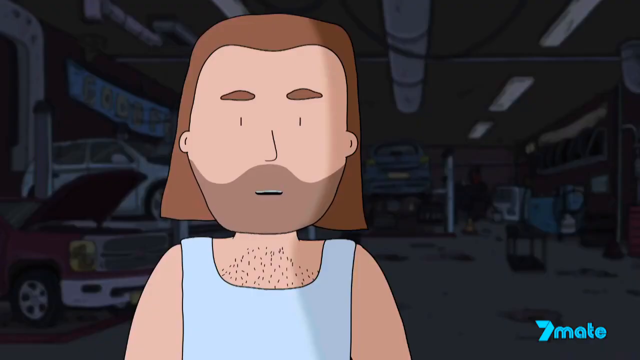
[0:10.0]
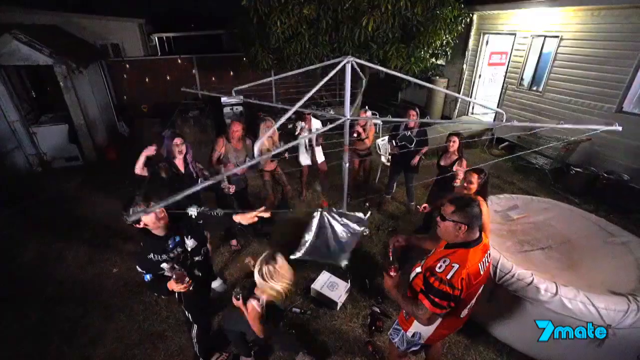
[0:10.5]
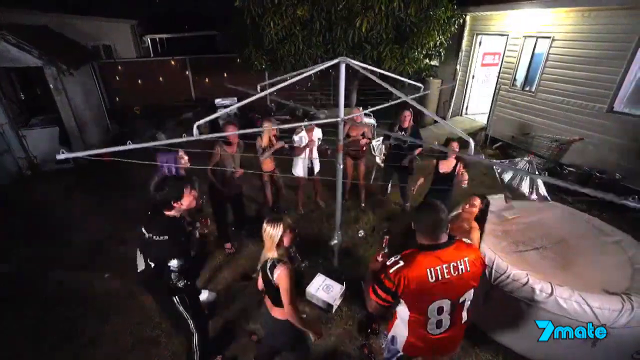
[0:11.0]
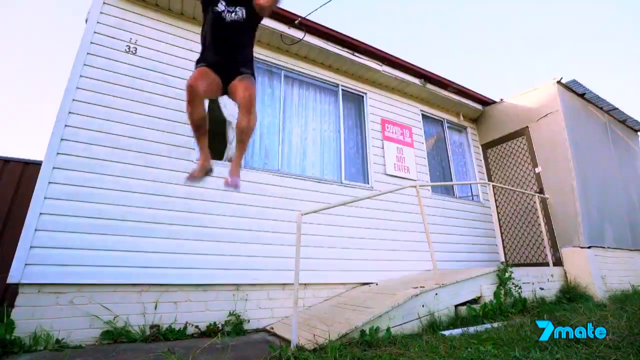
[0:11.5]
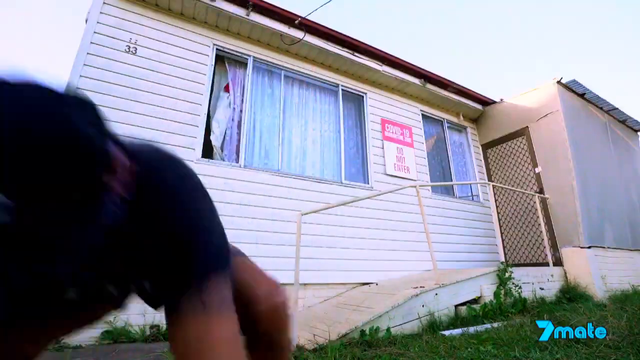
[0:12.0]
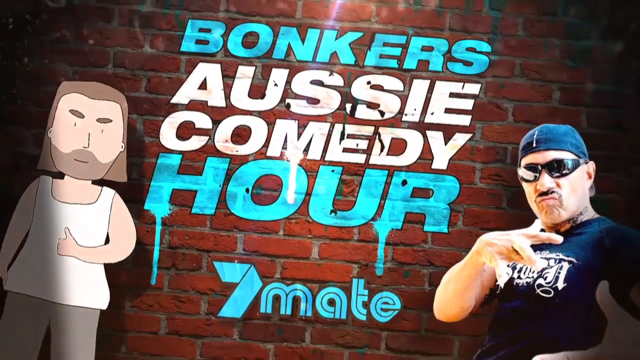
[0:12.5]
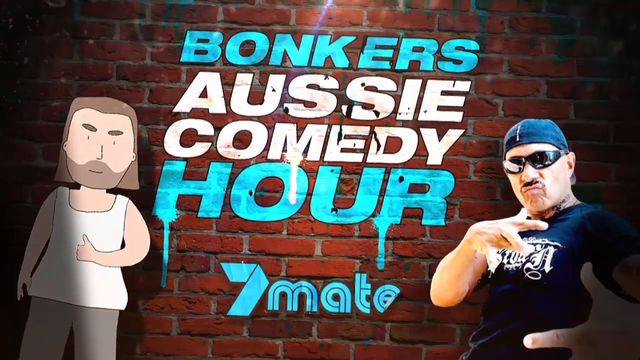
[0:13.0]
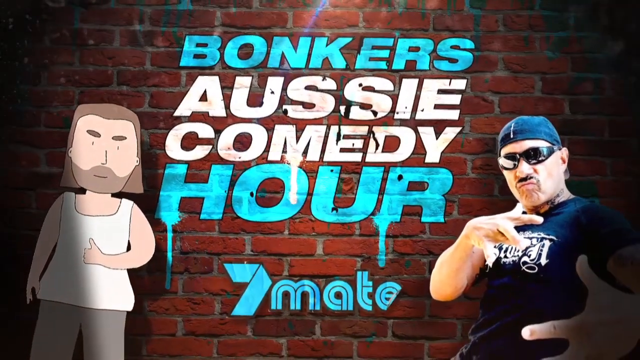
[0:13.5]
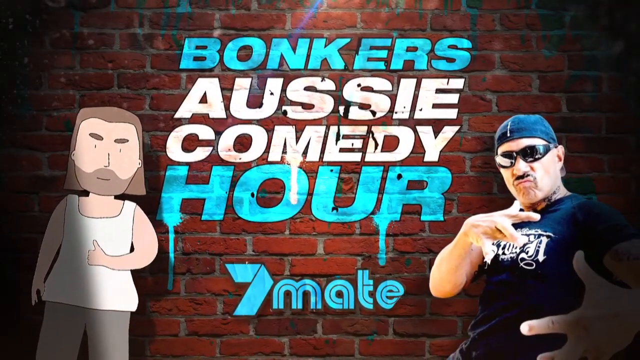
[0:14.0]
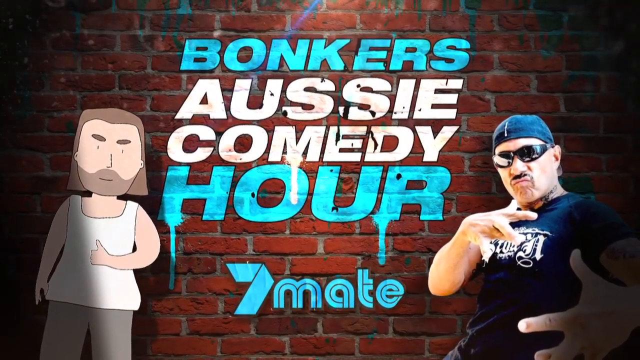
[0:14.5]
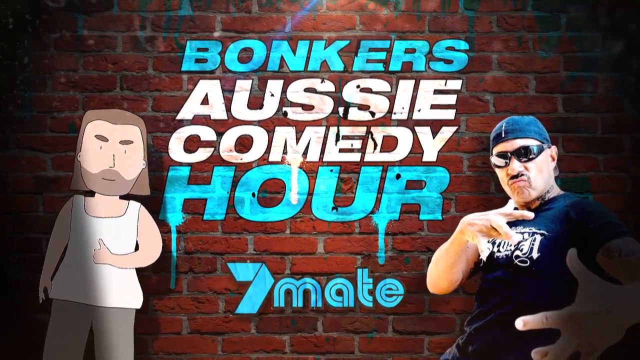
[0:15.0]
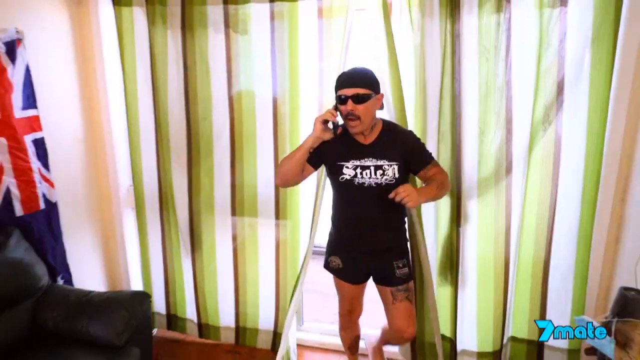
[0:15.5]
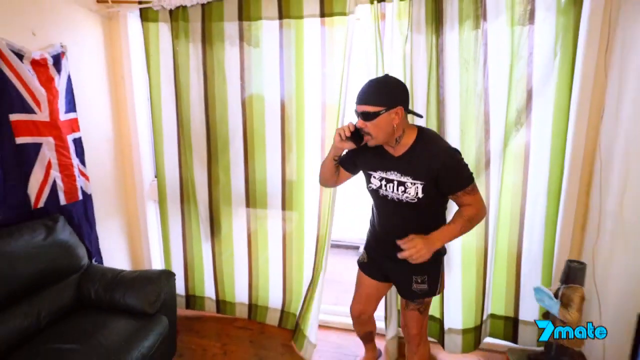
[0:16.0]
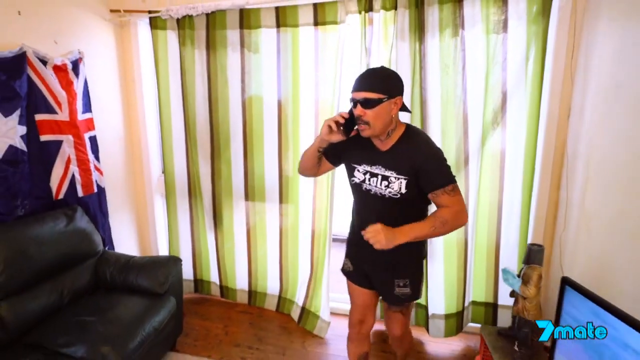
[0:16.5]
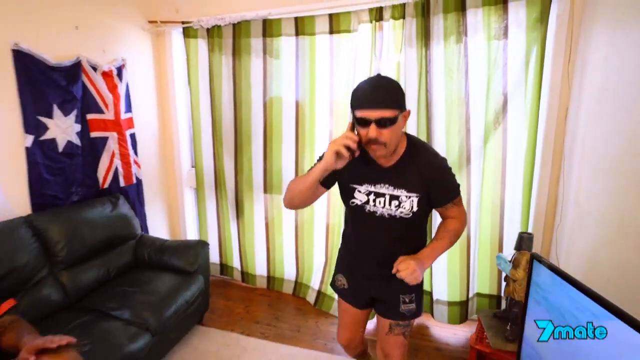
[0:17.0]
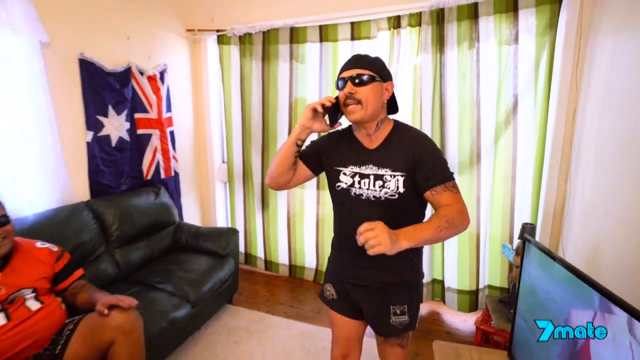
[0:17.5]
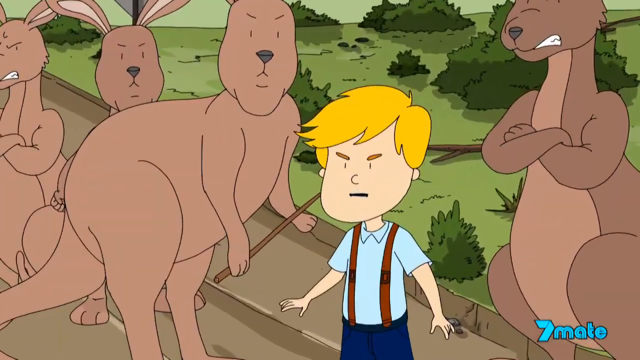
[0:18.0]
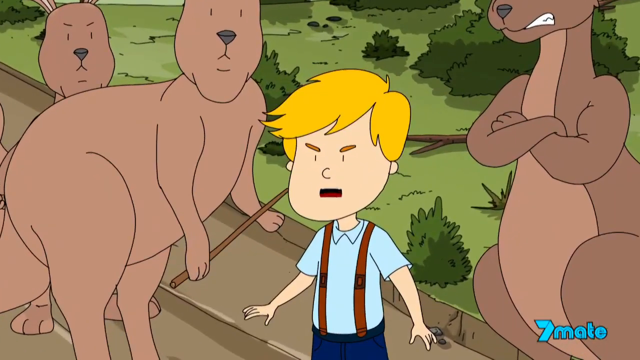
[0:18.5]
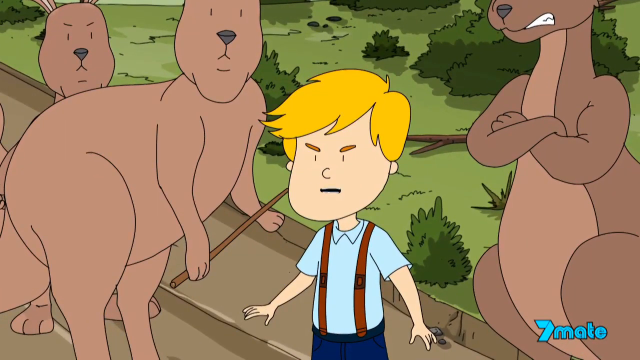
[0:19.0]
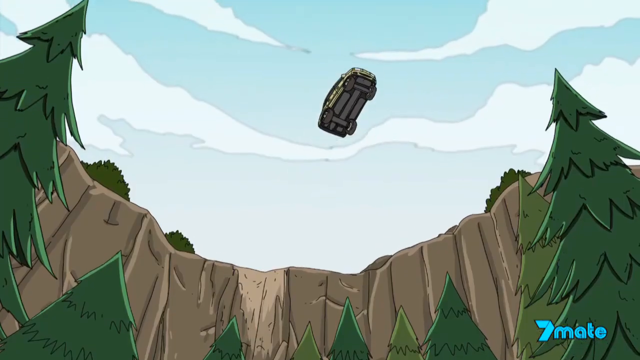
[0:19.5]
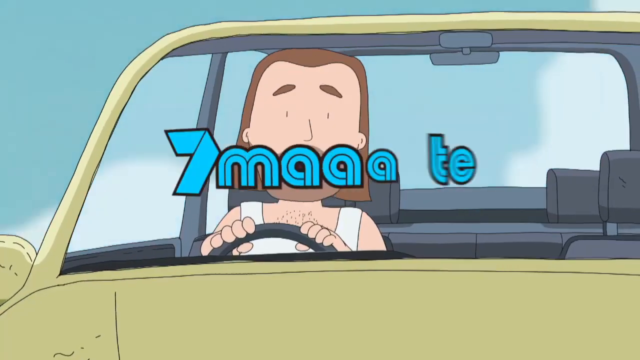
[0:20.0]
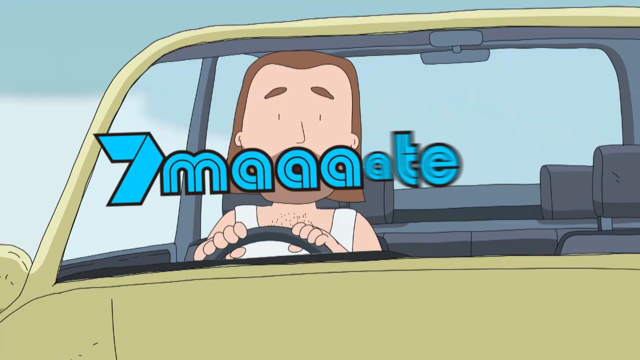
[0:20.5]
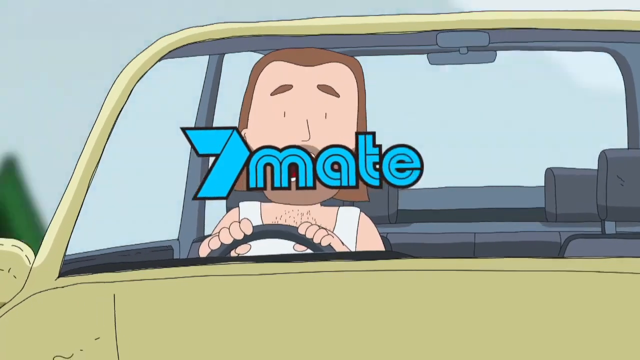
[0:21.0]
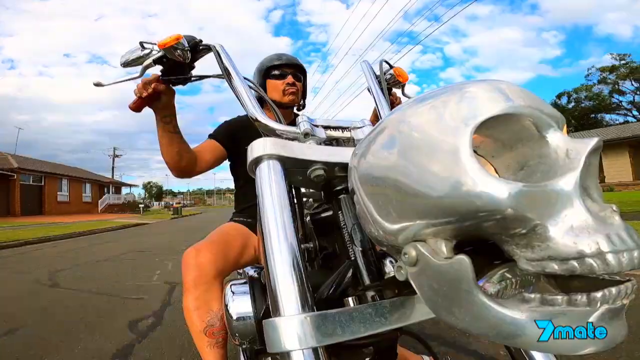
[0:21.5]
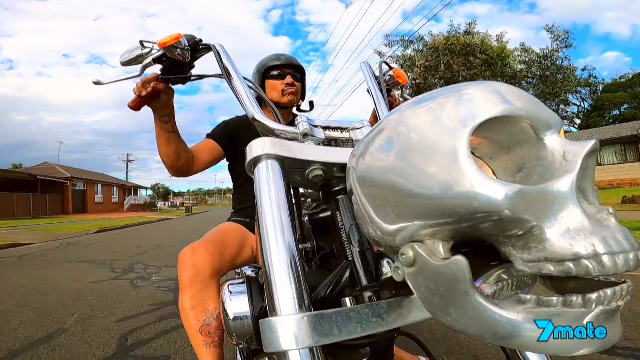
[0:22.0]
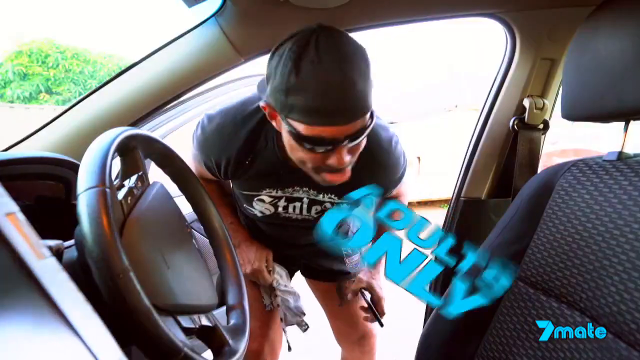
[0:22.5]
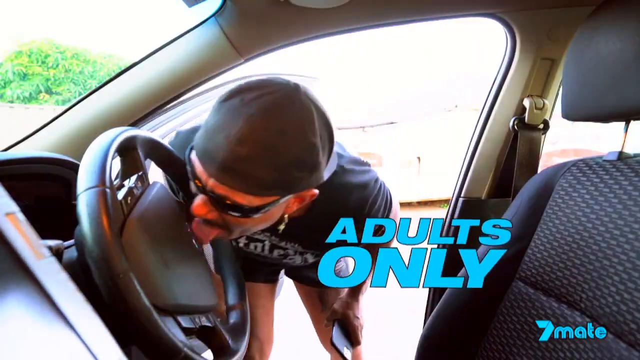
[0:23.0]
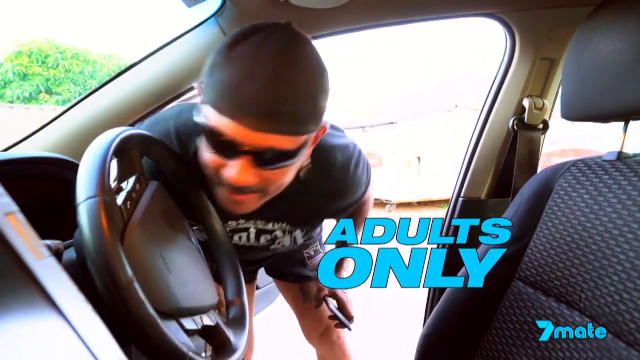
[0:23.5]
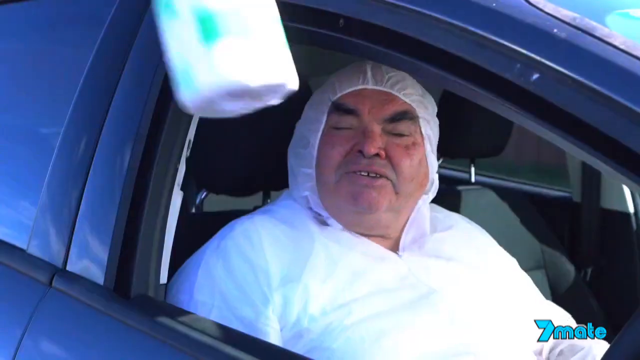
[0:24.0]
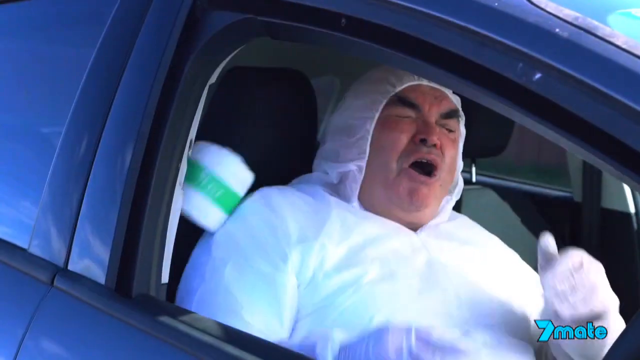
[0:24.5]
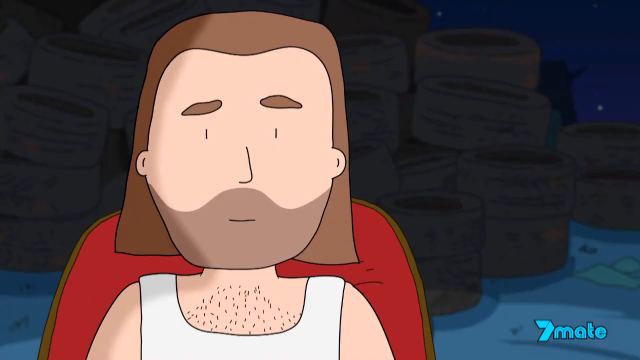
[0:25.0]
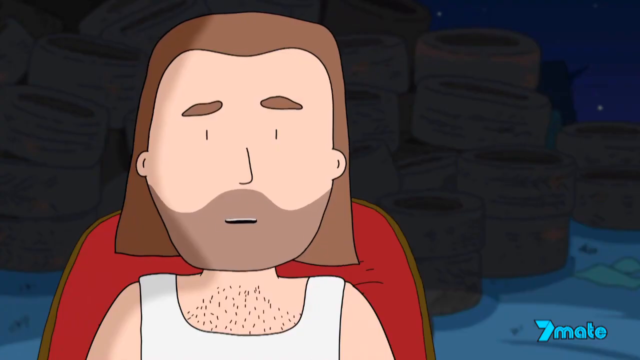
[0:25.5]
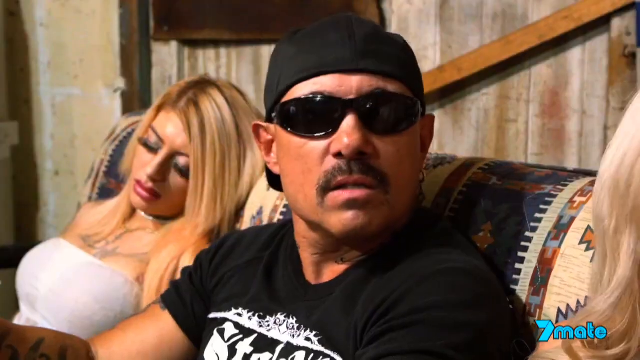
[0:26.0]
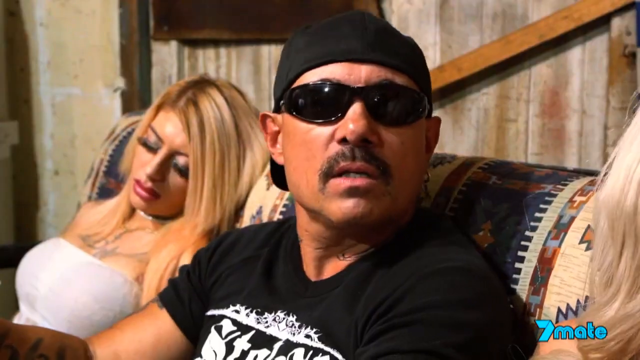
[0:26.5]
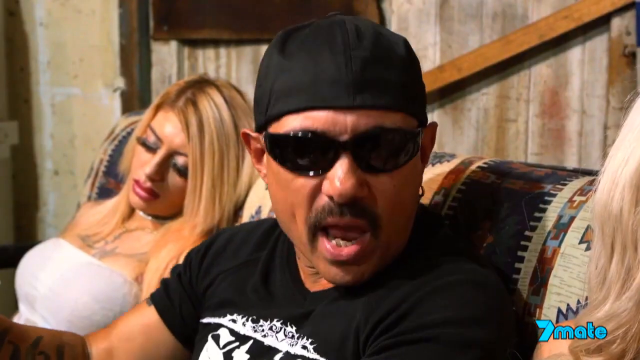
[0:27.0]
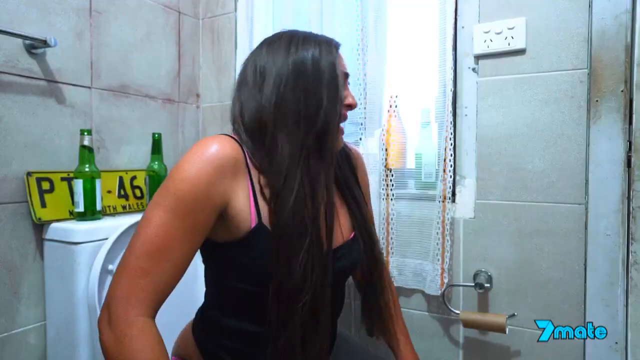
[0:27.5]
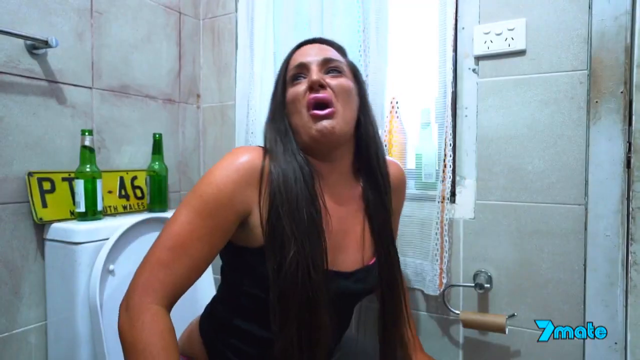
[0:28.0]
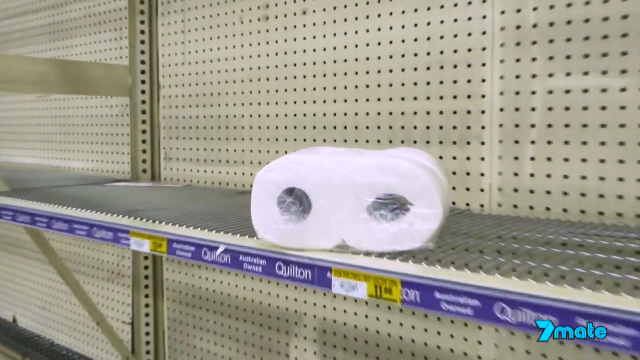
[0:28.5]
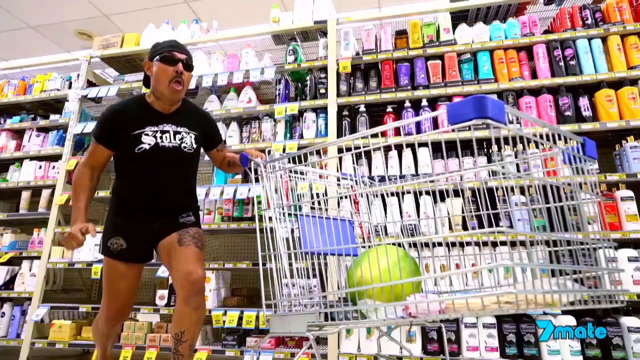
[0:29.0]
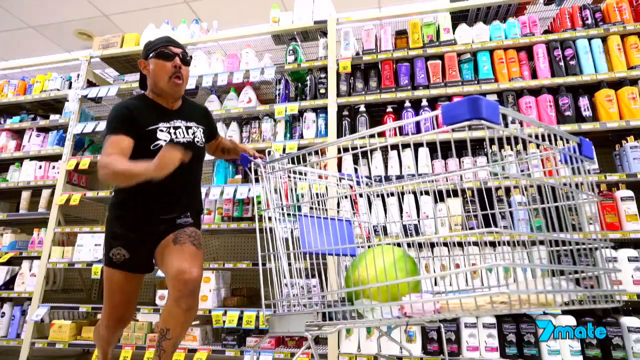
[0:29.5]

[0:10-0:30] The segment opens at the COVID-19 quarantine zone, then cuts to the cartoon character saying something. In the yard, the inflatable swimming pool is turned upside down, and the 13 people stand in a circle around a clothesline that is spinning in a circle. The first man, in dark shorts and a dark shirt, jumps out of a window over a wheelchair ramp on the wall of the house, which says "COVID-19 quarantine zone, do not enter." The video stops on a headline title that says "Bonkers Aussie Comedy Hour 7 Mate." The first man talks on a phone in a living room. A young blond-haired boy is shown surrounded by kangaroos, then a cartoon car flies off a cliff with "seven mate." The first man rides a motorcycle down a street, then gets something out of a car. He then sits in a lawn chair with a blond woman on each side, while a brunette woman screams from the bathroom. A lone package of toilet paper appears, with two men racing to buy it.